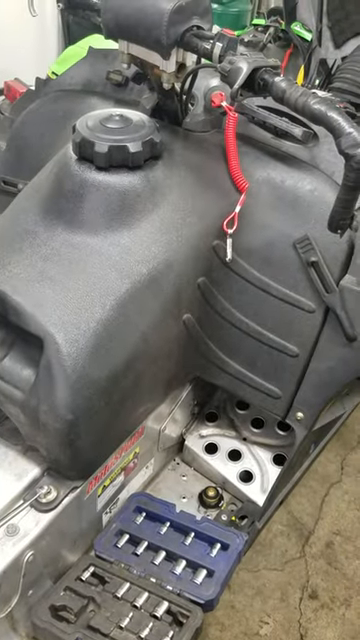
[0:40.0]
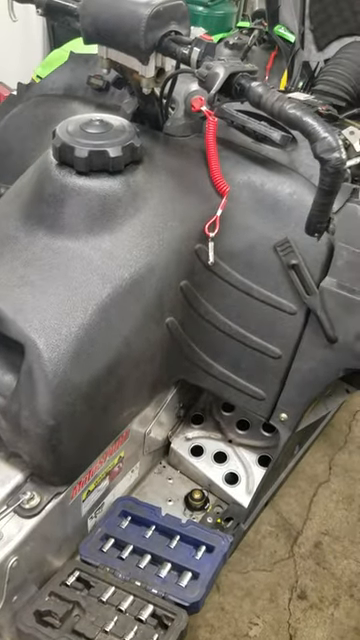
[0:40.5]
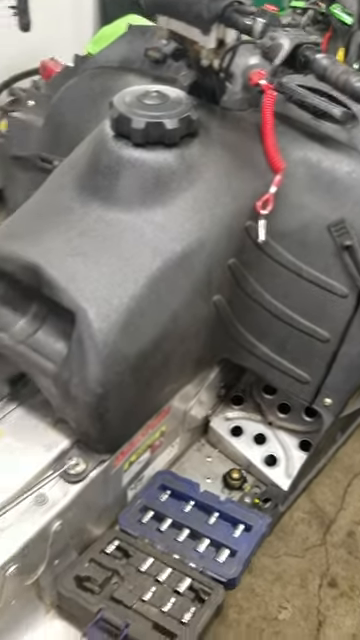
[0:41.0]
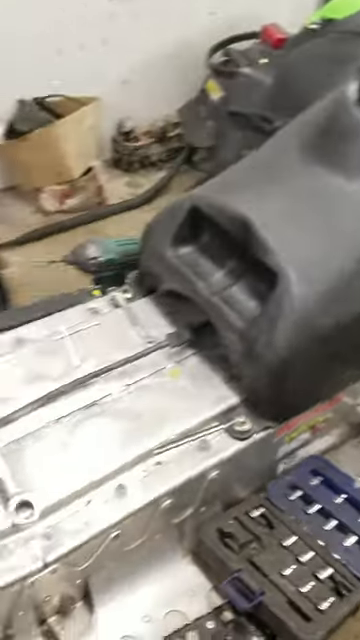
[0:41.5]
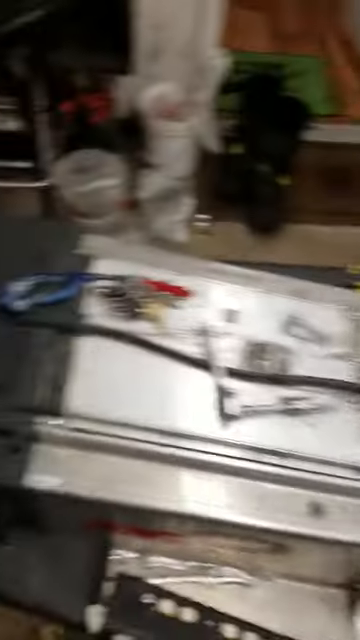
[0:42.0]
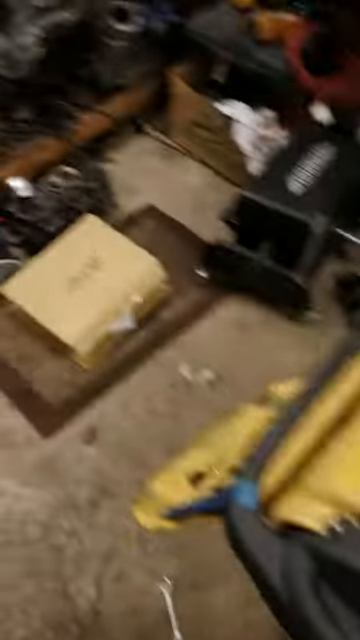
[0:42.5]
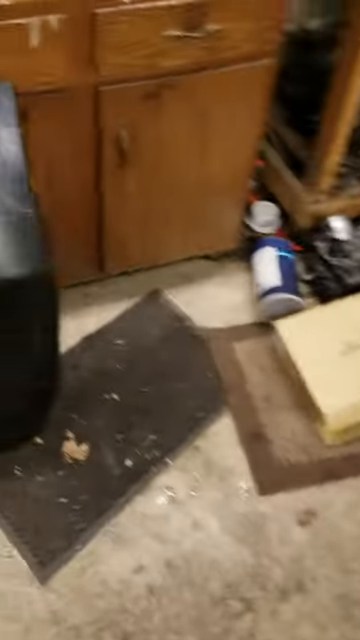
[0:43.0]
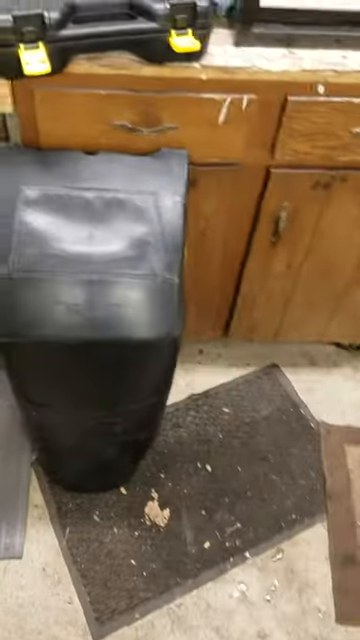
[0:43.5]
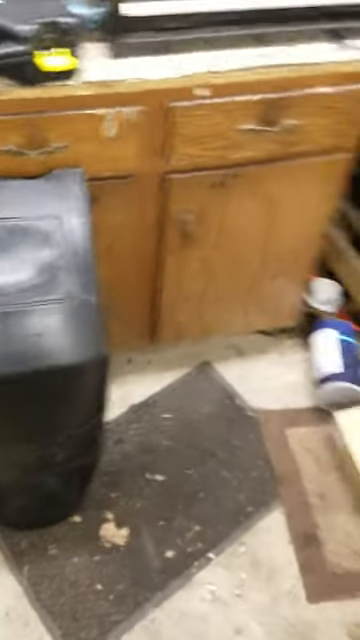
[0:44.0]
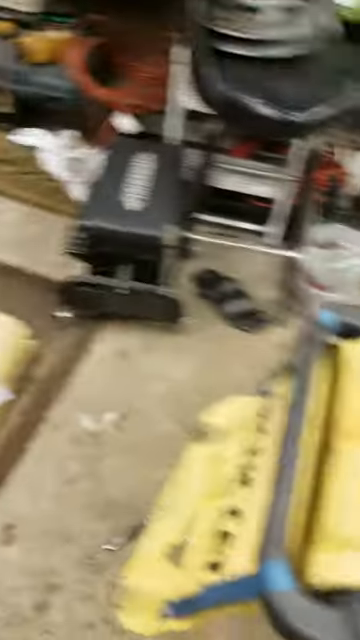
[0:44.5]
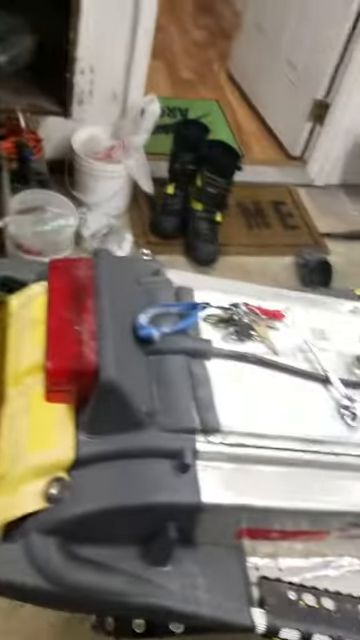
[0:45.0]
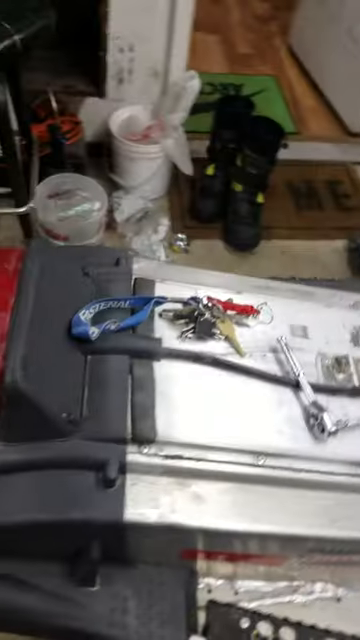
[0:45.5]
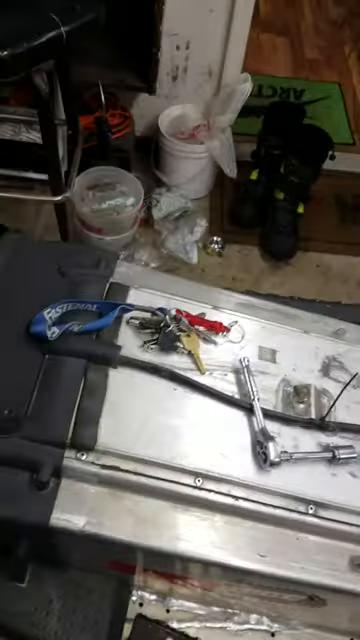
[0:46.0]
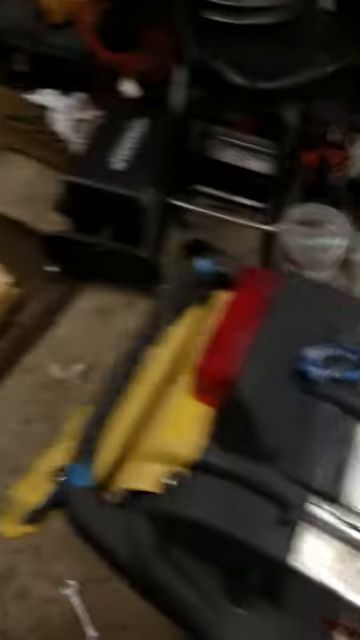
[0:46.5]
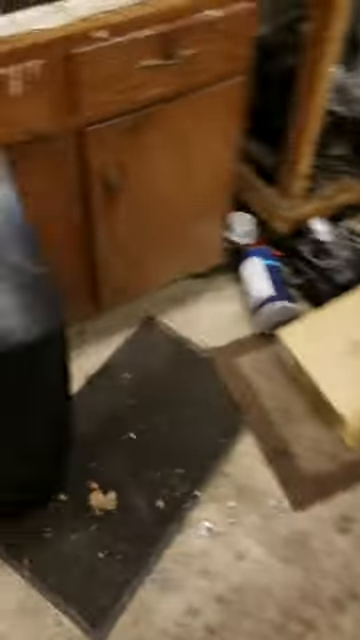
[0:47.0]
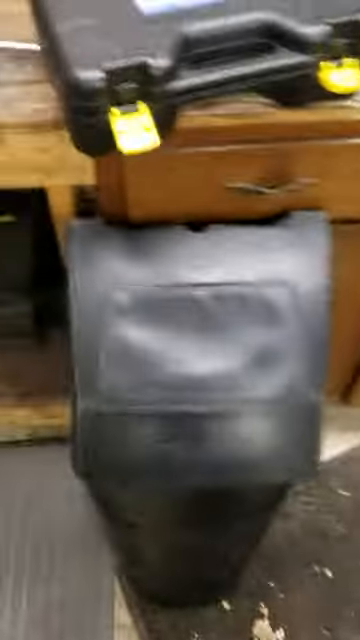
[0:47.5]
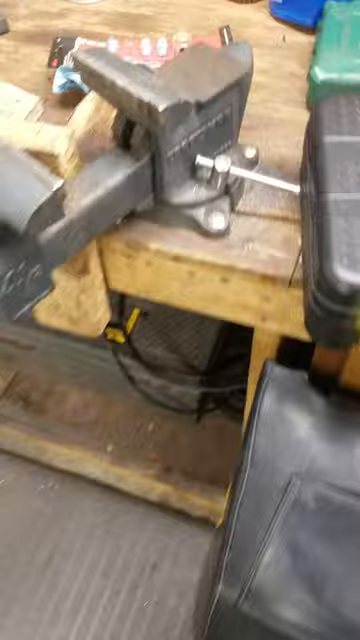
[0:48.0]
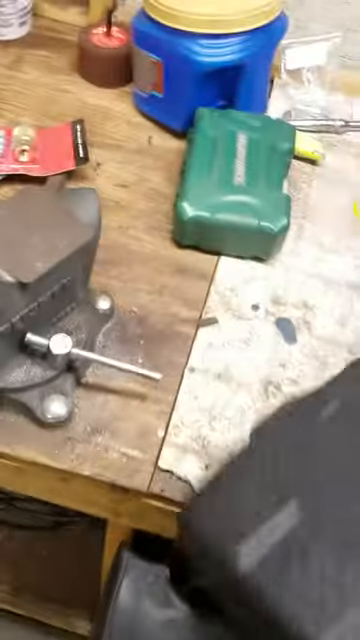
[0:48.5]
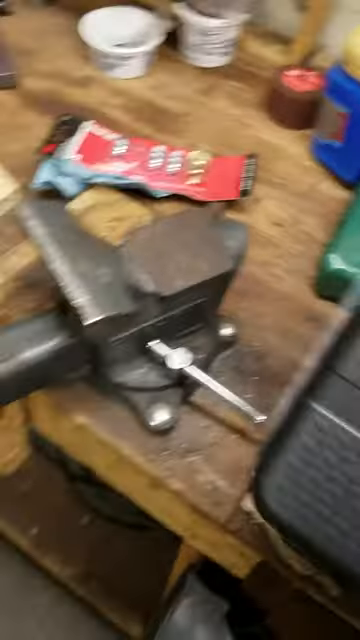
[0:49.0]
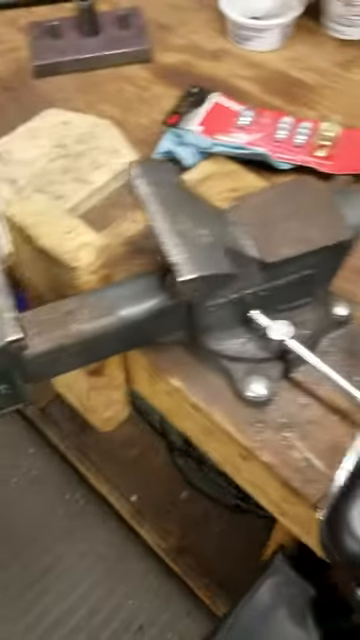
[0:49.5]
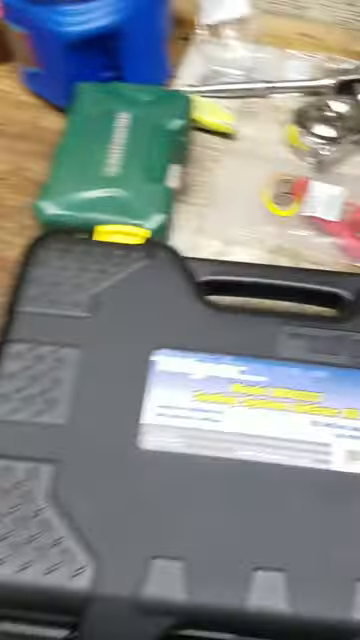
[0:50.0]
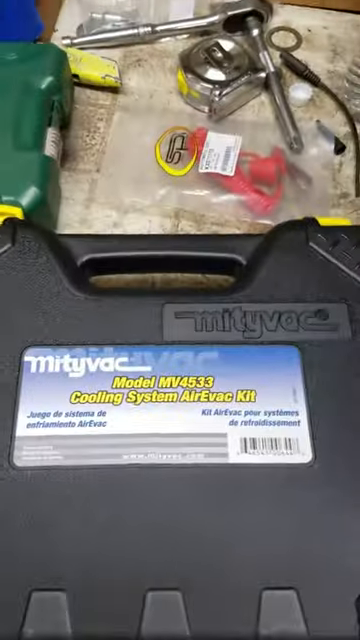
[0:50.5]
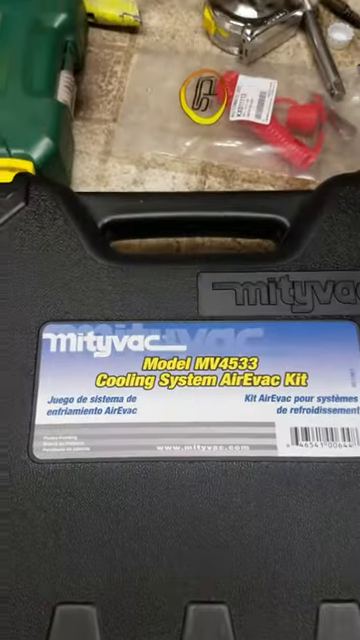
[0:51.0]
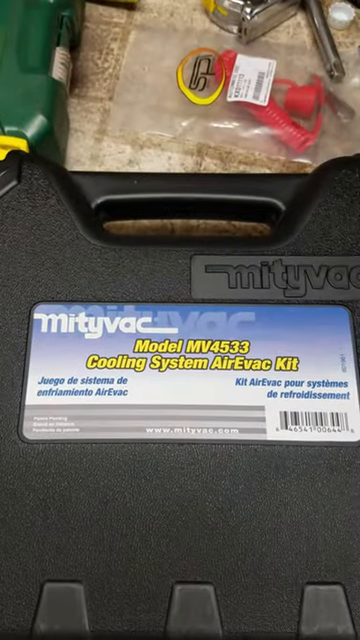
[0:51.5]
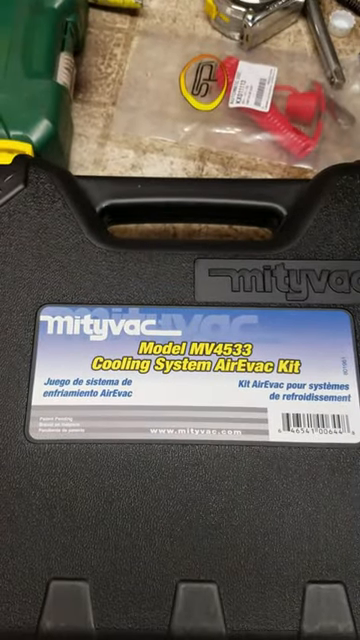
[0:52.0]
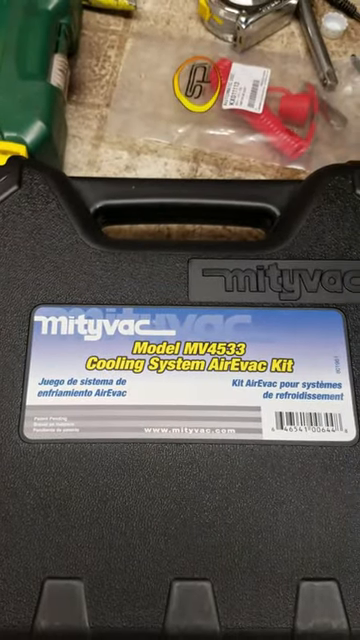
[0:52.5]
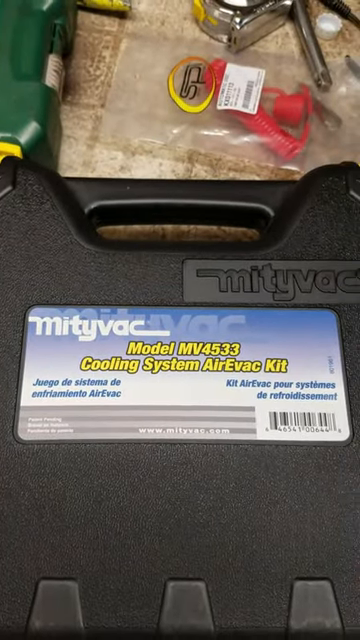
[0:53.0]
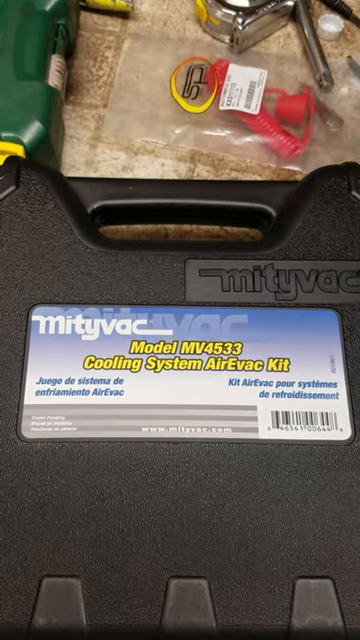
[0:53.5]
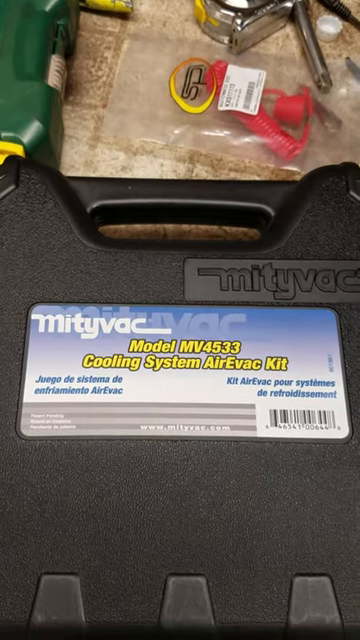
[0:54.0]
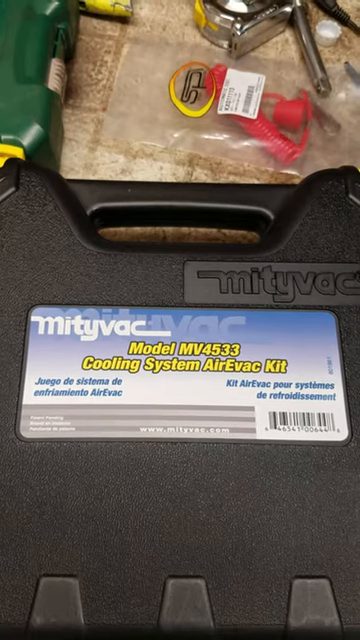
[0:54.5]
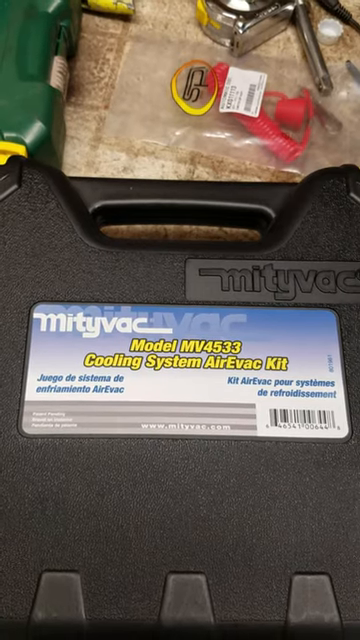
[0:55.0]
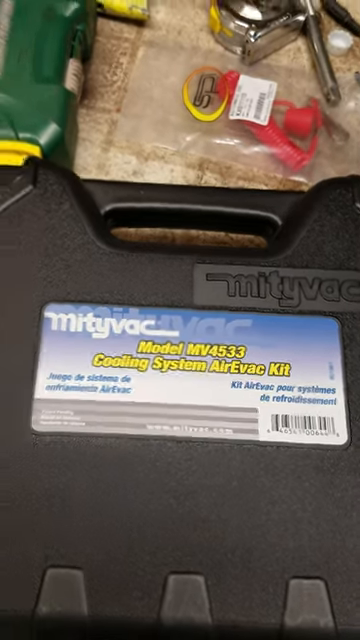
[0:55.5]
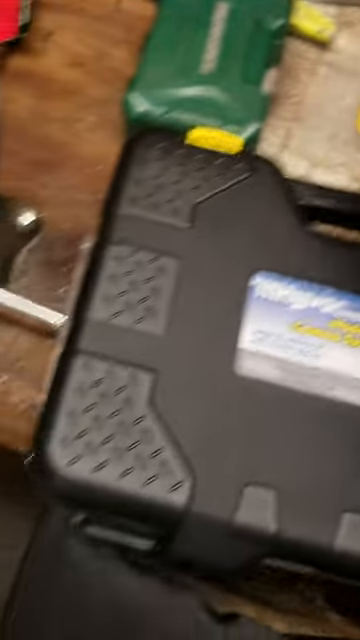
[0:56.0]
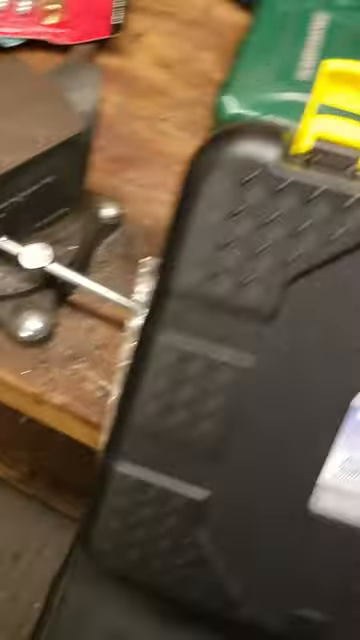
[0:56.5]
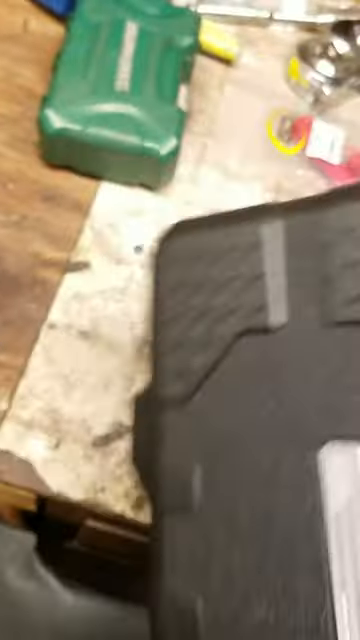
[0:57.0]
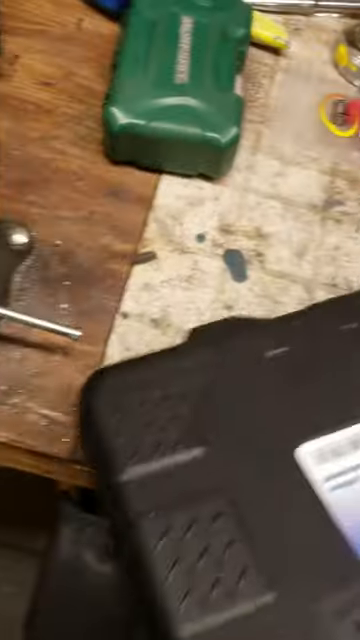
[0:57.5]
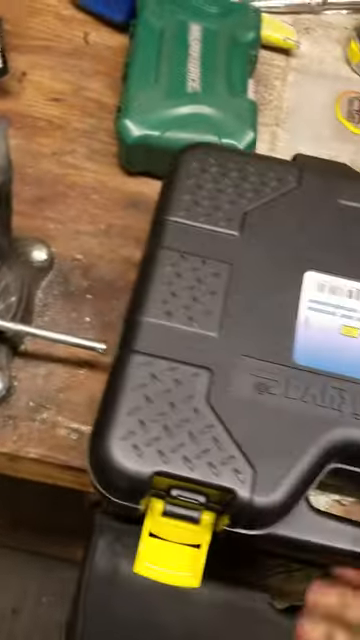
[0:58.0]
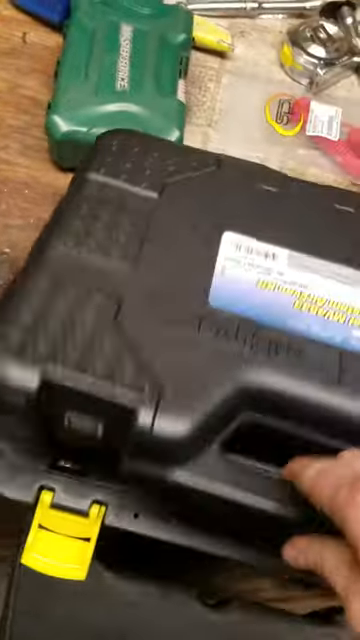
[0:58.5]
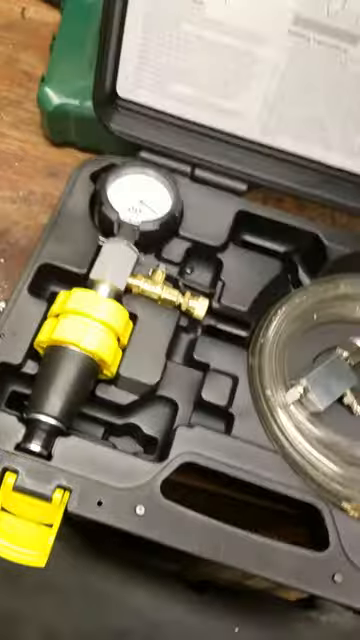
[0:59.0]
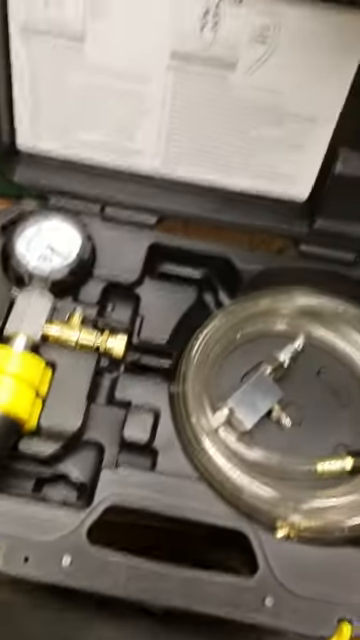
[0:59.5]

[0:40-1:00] Someone films a component of what may be an engine or some sort of electronic device. Something big and gray is kind of laying on a table, possibly an engine that has been taken out. The person pans around, showing some Folgers coffee and different tools on a workbench. They open something up, revealing tubing and equipment that looks almost like a pressure gauge, shaped like a clock with a dial, and the tubing looks like it would attach to this item. Possibly they are working on something to fix it. There are gold attachments for coupling pieces together, and the tubing is clear. The person filming moves very quickly. Something almost like a coiled key chain is attached to the top of the gray item, near where fluid could be put in.